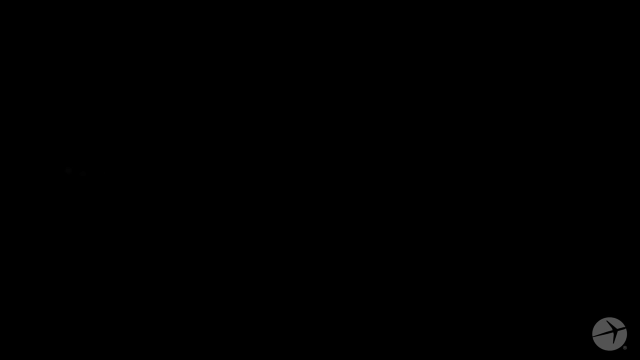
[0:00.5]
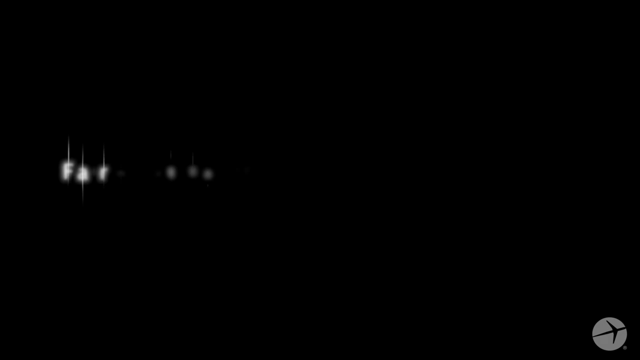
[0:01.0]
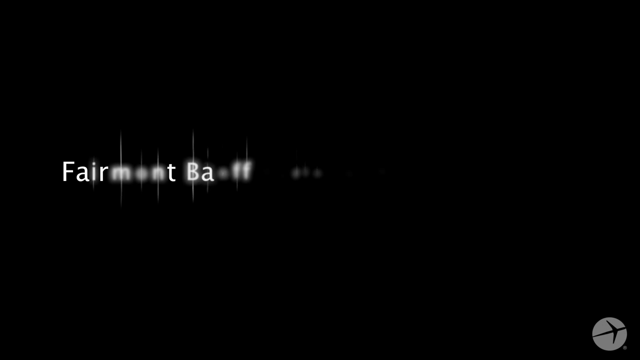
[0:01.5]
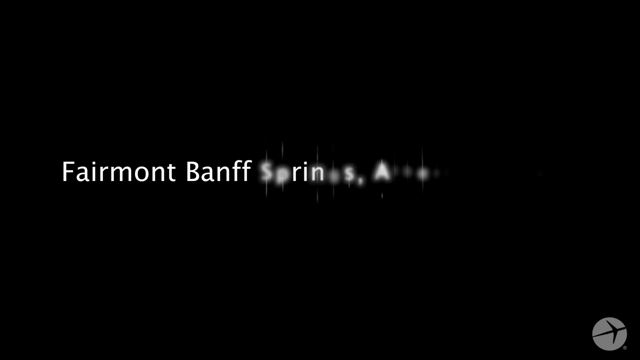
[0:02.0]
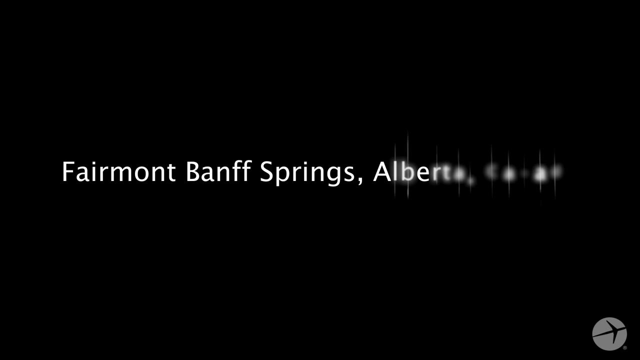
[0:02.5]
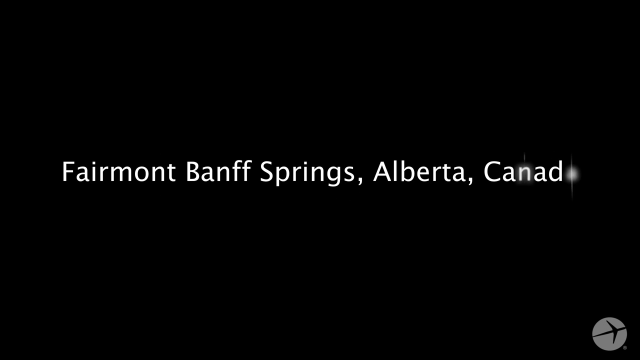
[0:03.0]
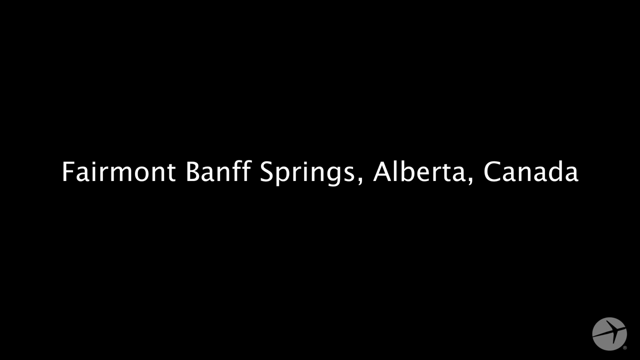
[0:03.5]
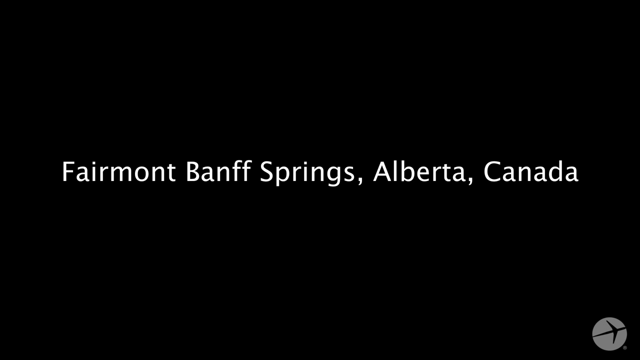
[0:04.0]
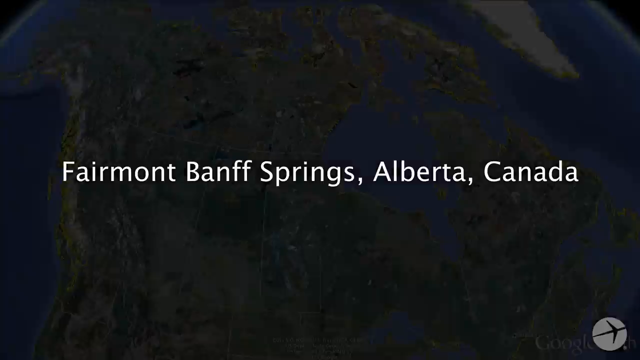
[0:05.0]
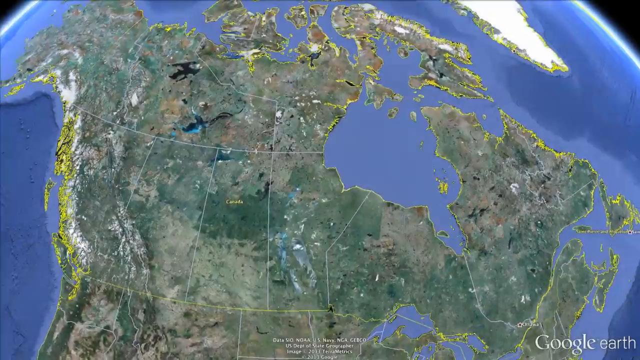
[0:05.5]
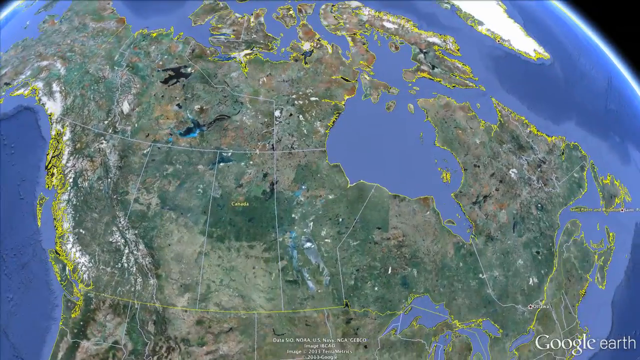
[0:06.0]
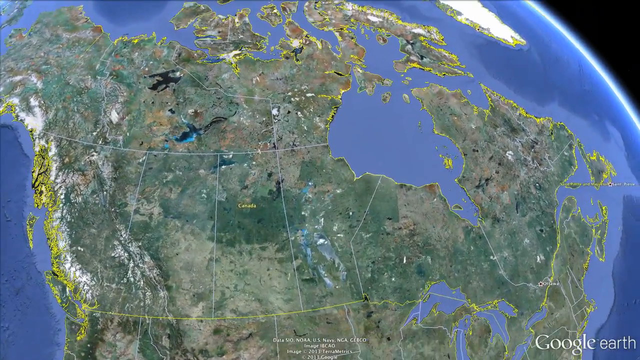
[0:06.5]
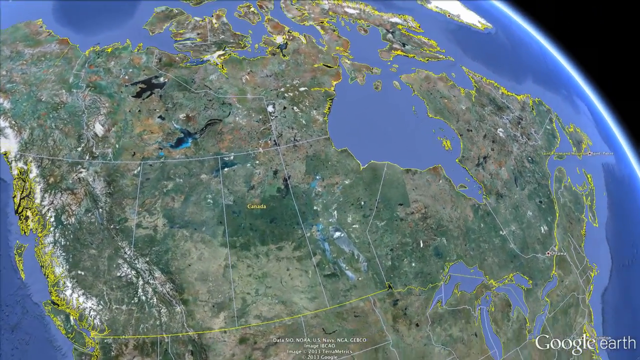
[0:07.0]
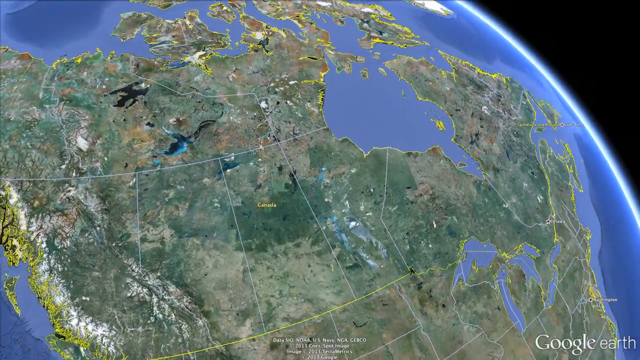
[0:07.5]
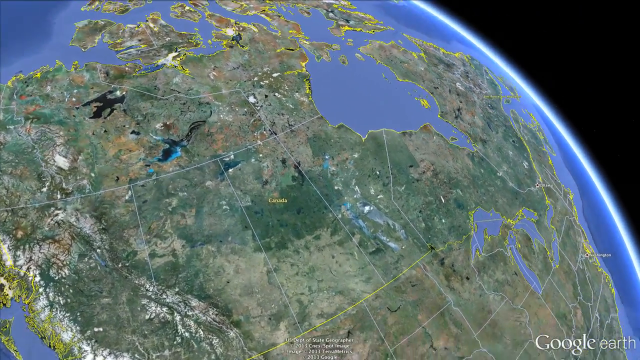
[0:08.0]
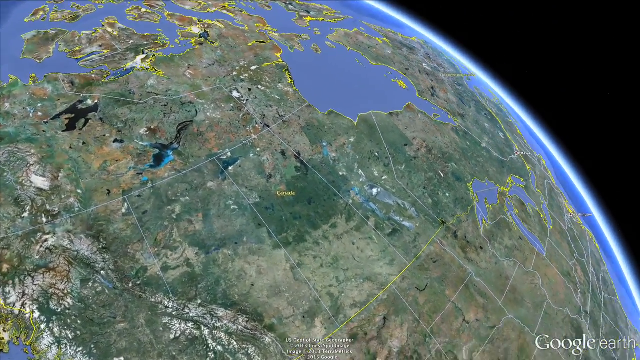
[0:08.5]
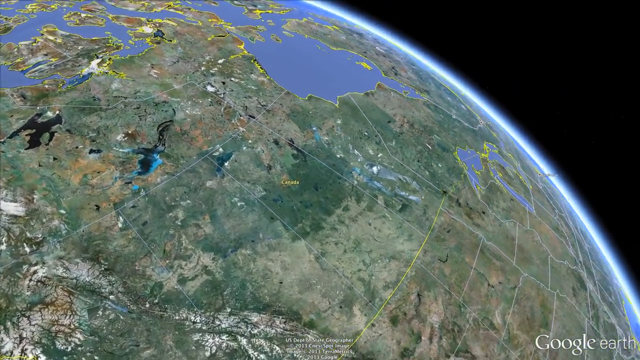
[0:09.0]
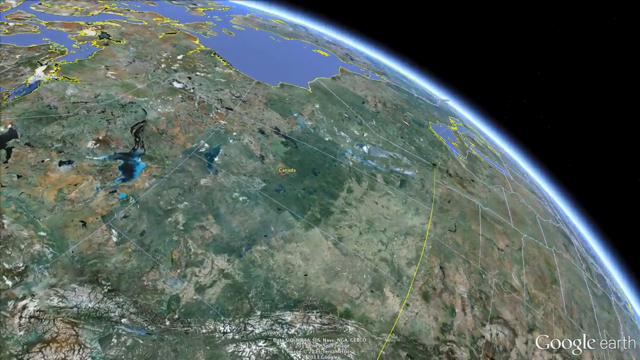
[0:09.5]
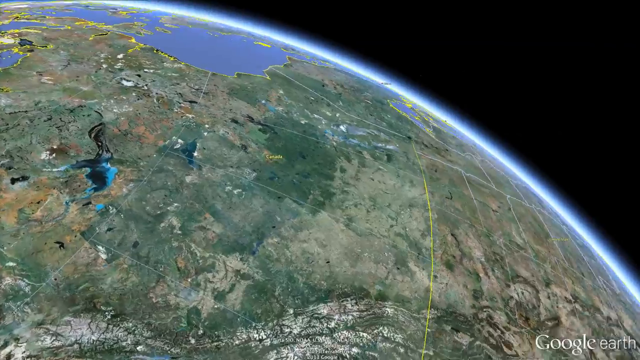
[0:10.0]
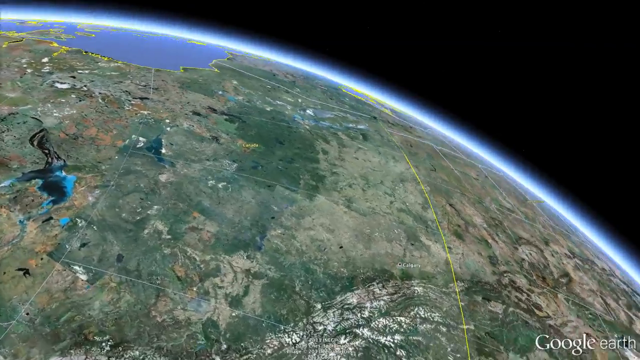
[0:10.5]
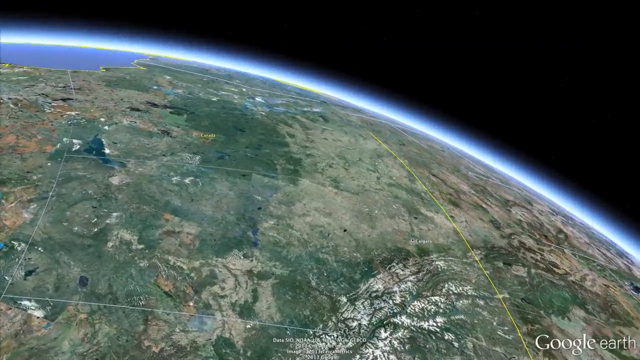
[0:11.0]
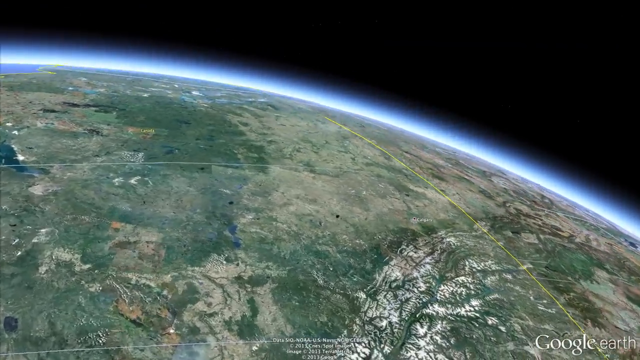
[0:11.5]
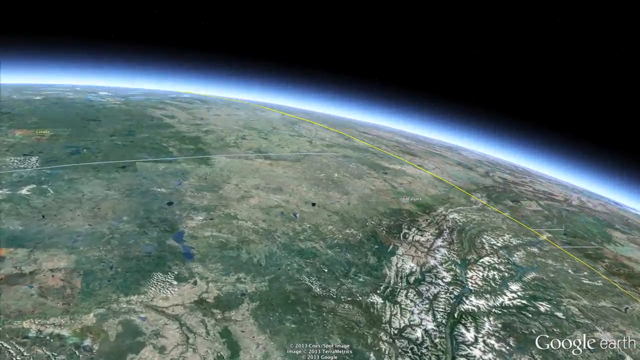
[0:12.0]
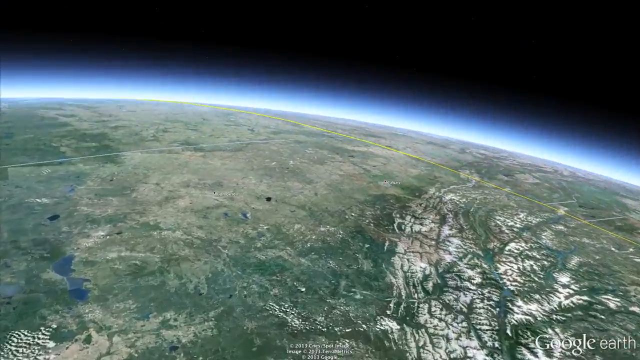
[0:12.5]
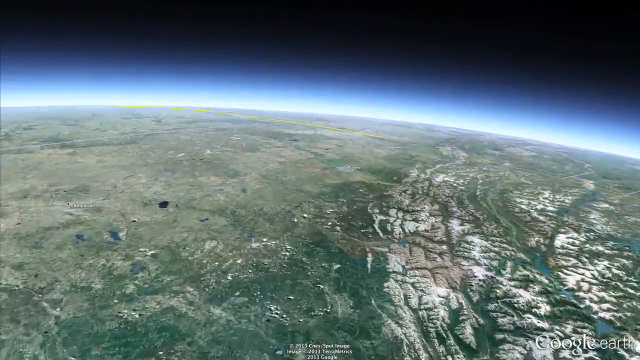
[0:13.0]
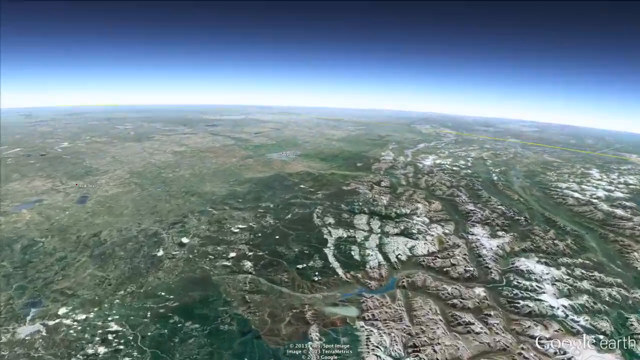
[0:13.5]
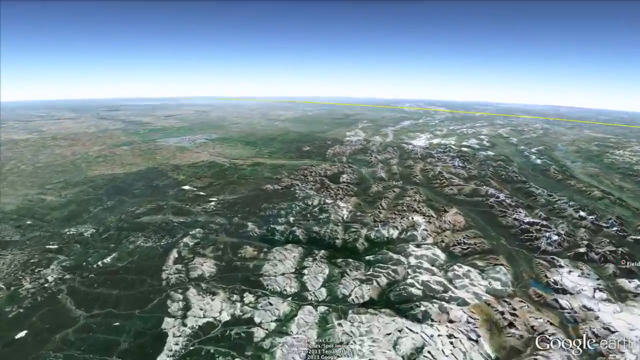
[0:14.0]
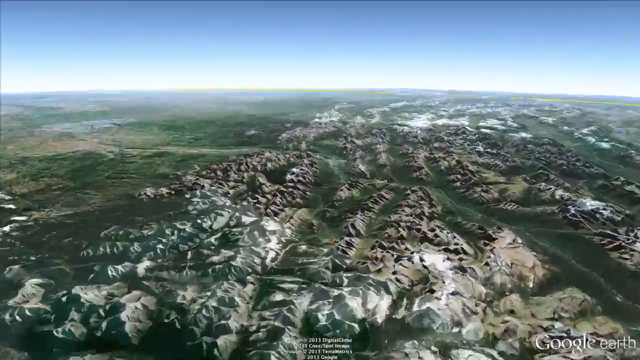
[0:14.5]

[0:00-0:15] The video opens on a black background with white text across the middle of the screen reading "Fairmont Banff Springs, Alberta, Canada." Next comes a shot of the earth as seen from space, zoomed all the way out, showing the ocean and green land. "Google Earth" is written at the bottom right of the video. The earth rotates slightly, and much of North America is visible, with the word "Canada" written in yellow. The view begins to zoom into the earth, slowly at first and then a little quicker, getting closer and closer until it reaches the earth and finally stops.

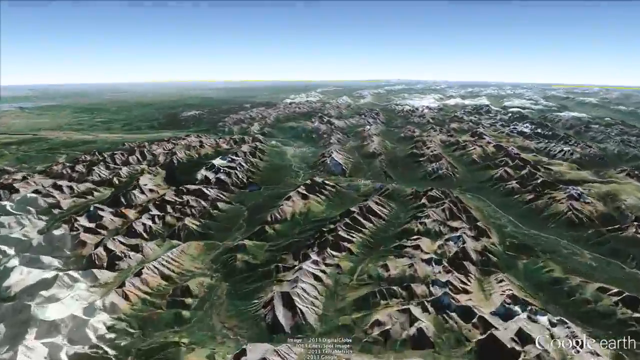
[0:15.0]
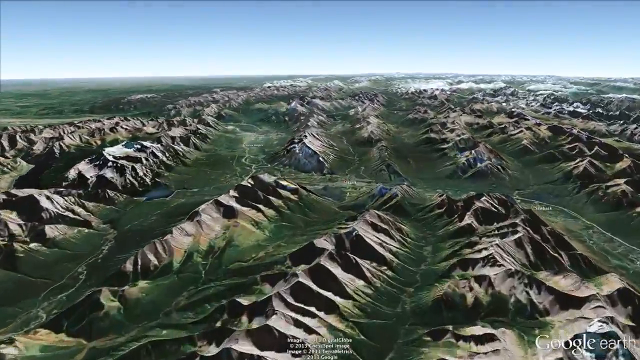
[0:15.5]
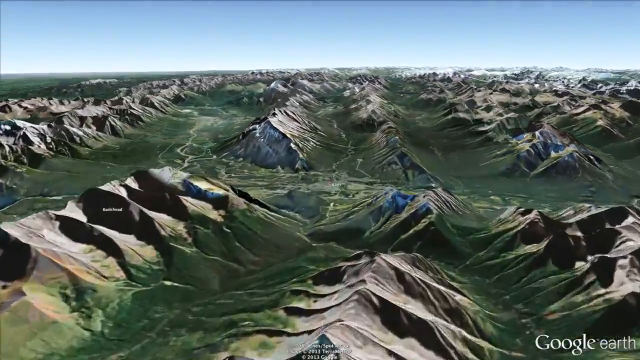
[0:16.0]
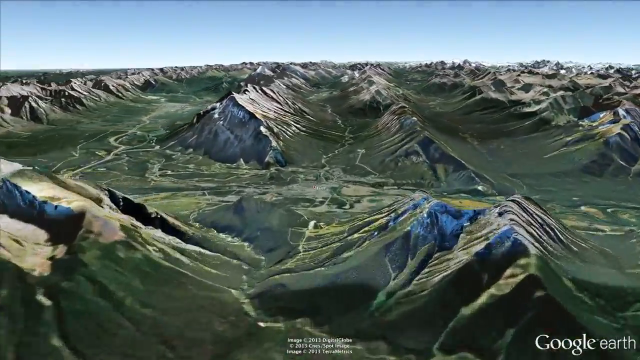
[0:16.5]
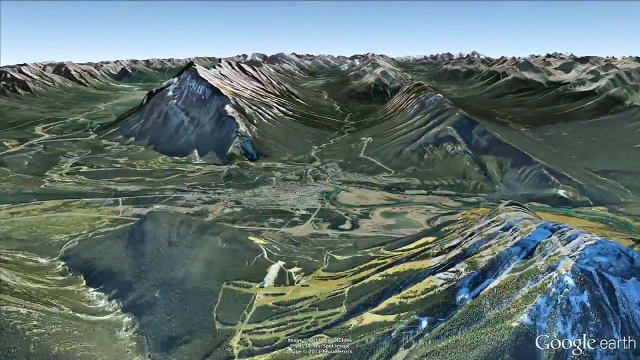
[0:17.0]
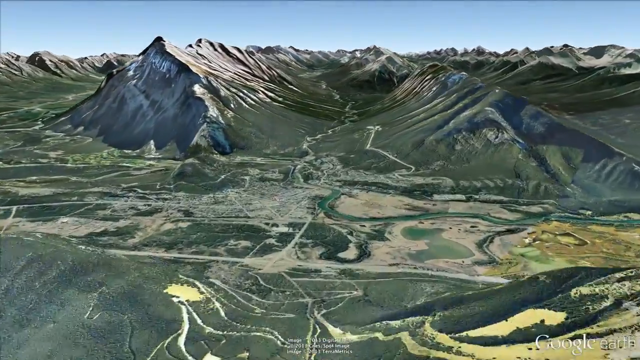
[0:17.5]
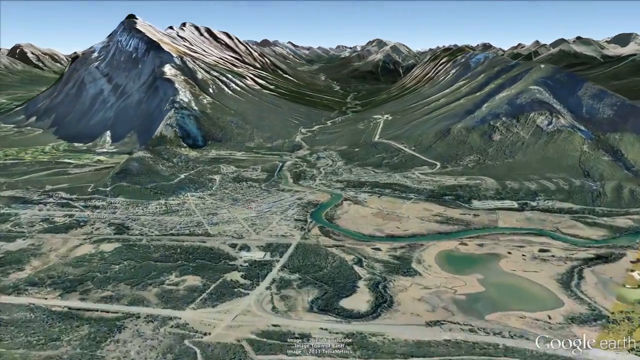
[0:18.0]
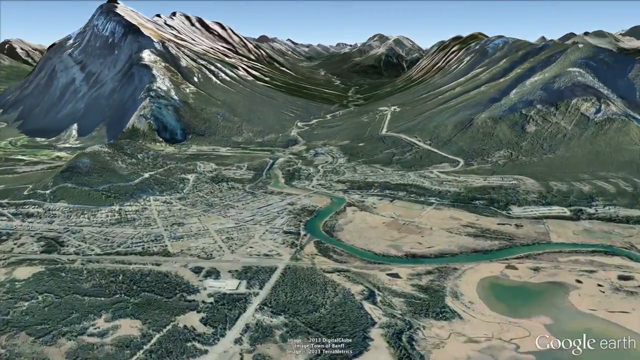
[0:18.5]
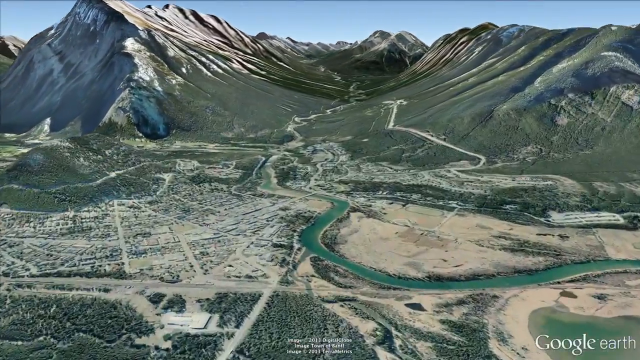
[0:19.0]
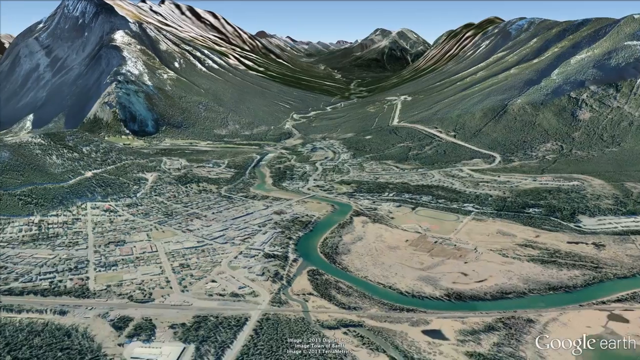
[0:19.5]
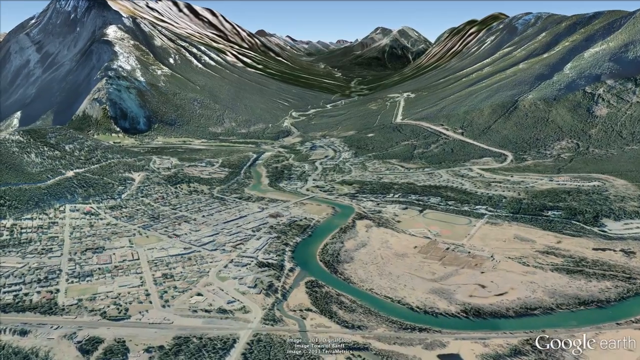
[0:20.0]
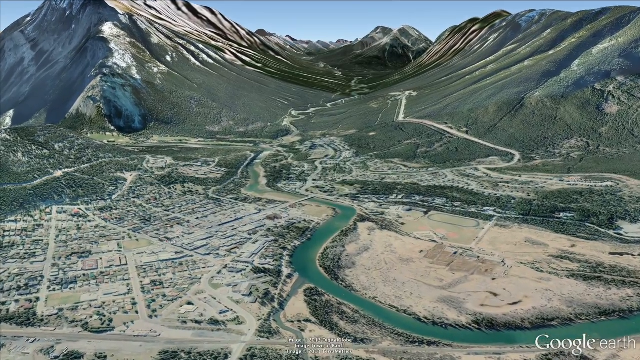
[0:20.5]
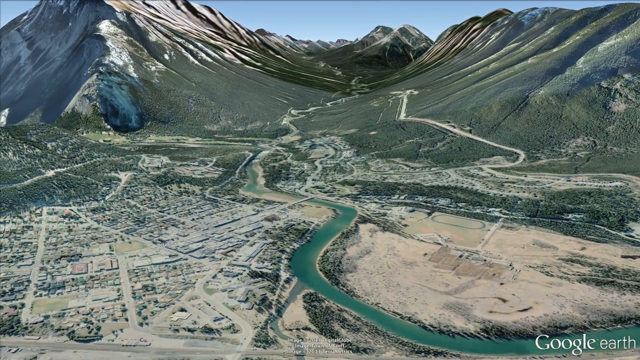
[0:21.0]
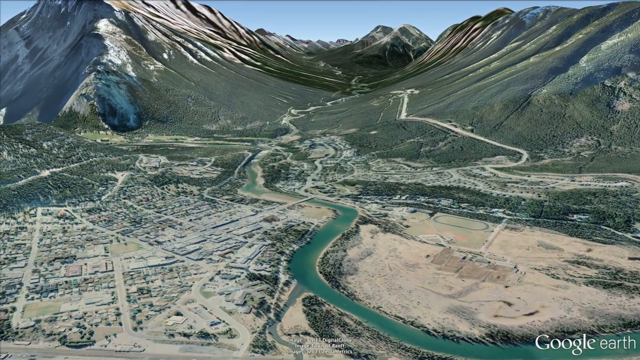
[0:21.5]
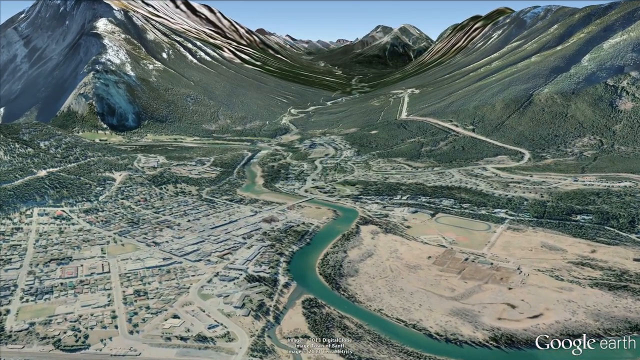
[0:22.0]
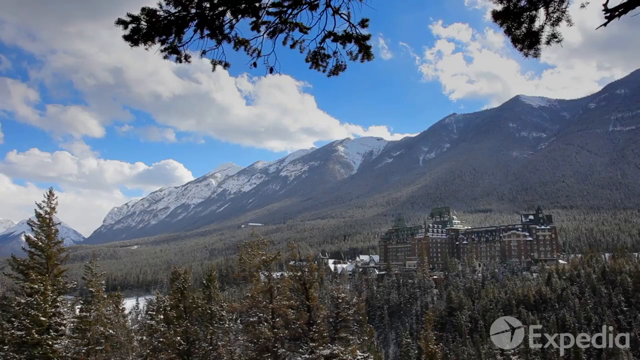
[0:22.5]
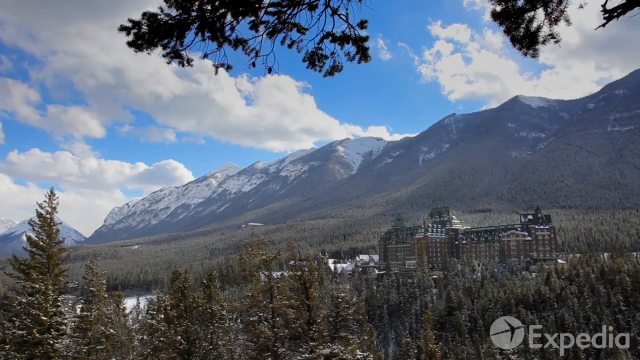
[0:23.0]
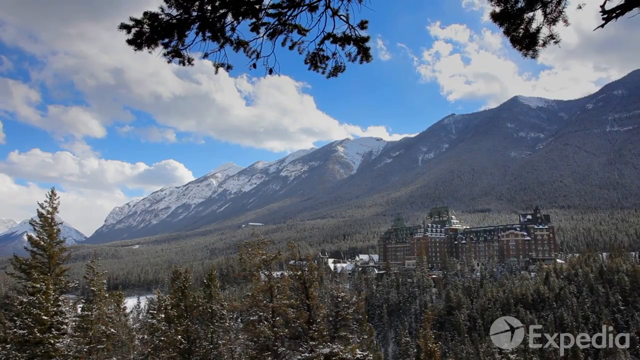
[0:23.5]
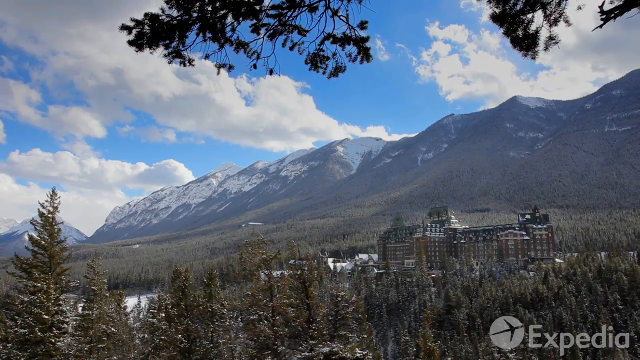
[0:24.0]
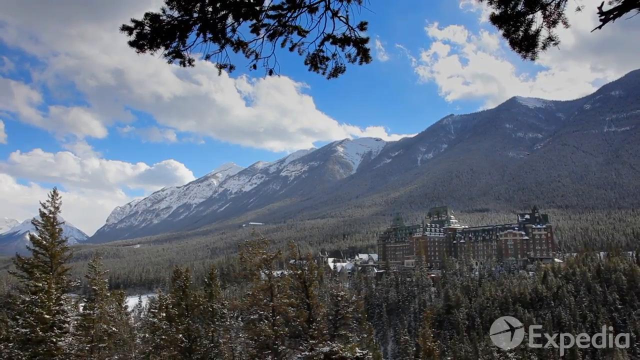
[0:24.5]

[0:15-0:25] The view zooms into the earth, revealing lots of mountains along with large patches of green grass and trees. It keeps getting closer before stopping. A river and large areas with dry patches of land are visible. The view moves in closer still before coming to a halt. Next comes a shot of the mountains, blue skies and clouds, with a bunch of trees and a large building in the background. "Expedia" now appears at the bottom right of the screen.